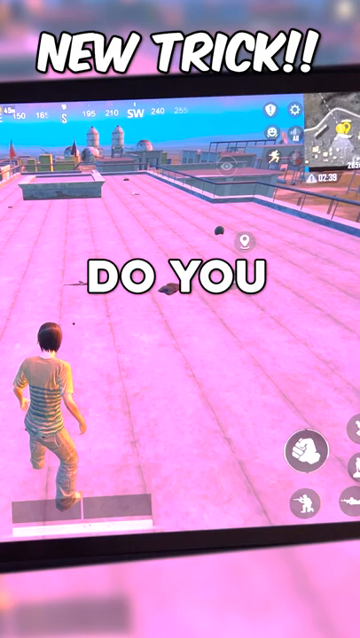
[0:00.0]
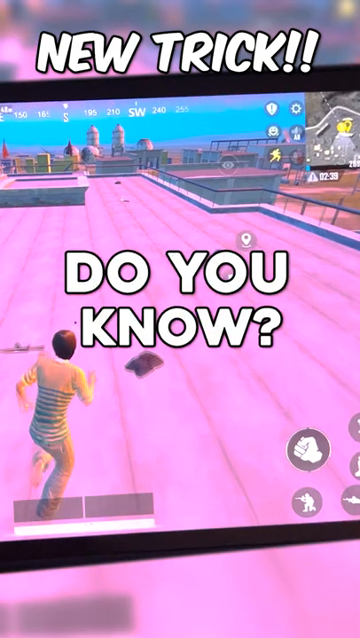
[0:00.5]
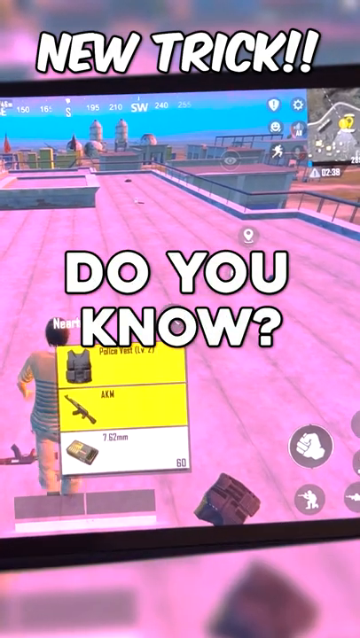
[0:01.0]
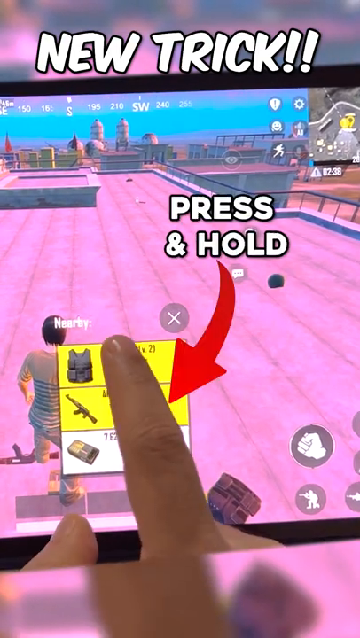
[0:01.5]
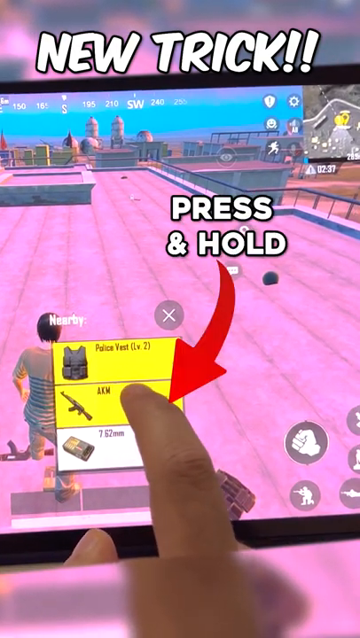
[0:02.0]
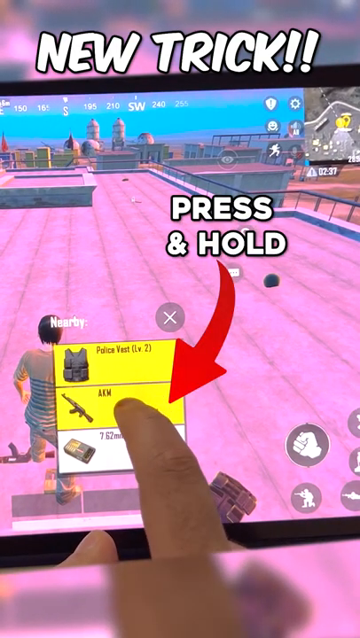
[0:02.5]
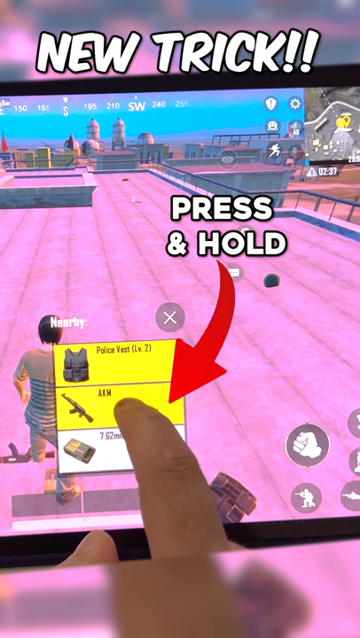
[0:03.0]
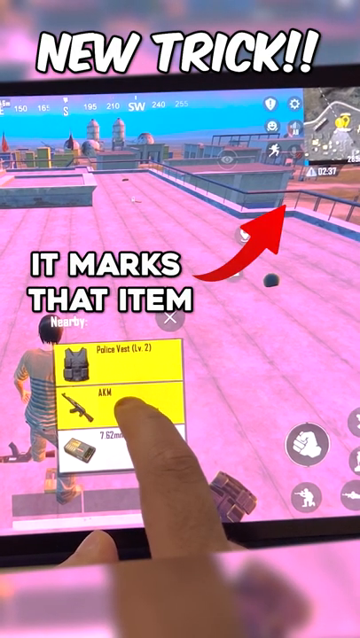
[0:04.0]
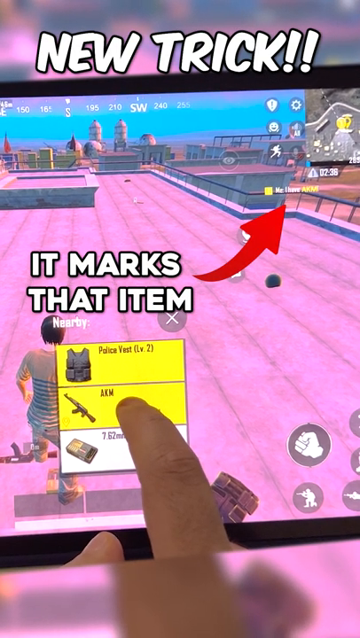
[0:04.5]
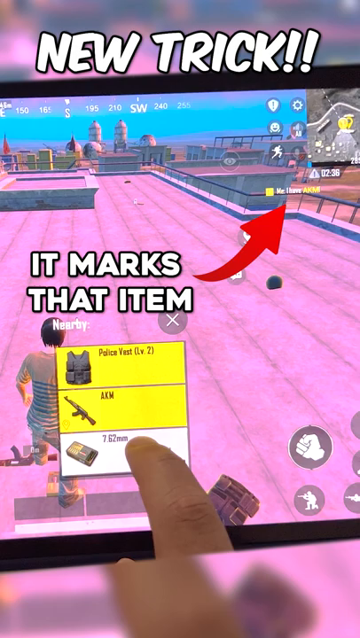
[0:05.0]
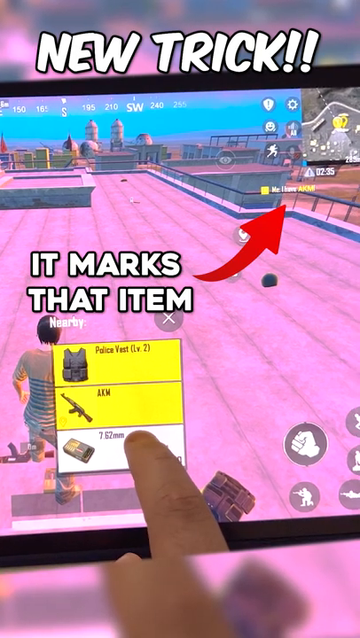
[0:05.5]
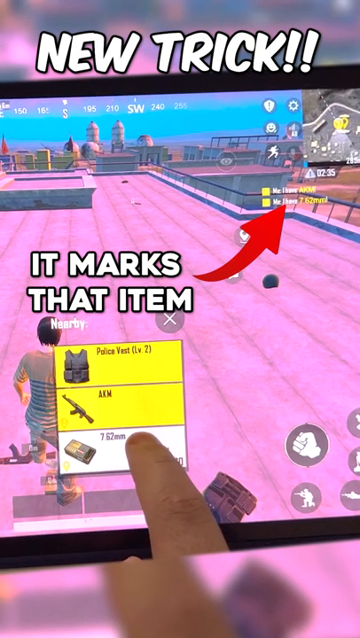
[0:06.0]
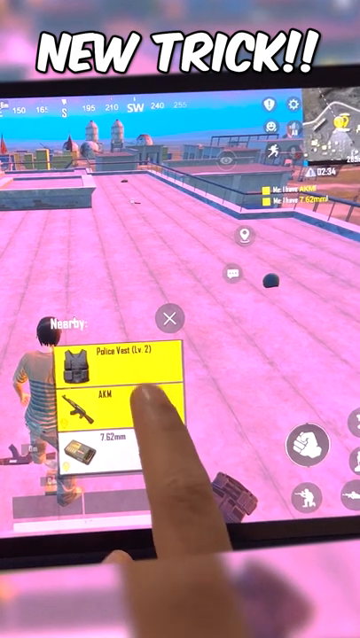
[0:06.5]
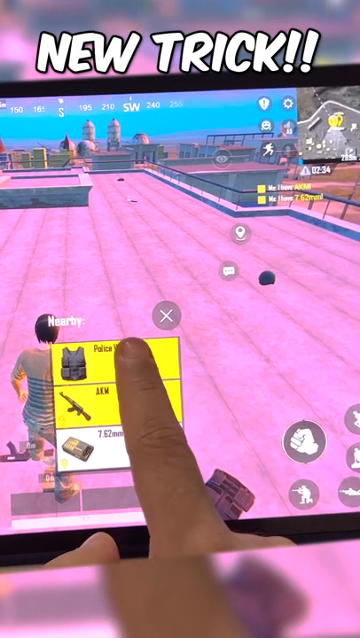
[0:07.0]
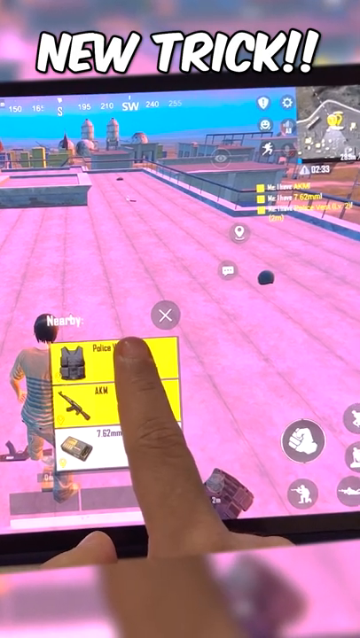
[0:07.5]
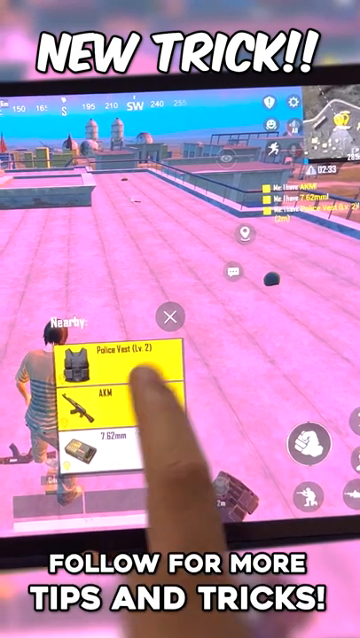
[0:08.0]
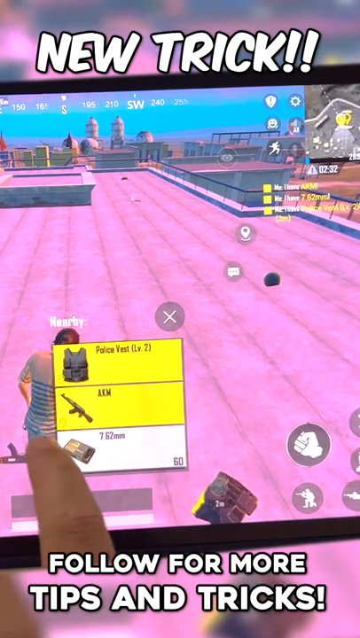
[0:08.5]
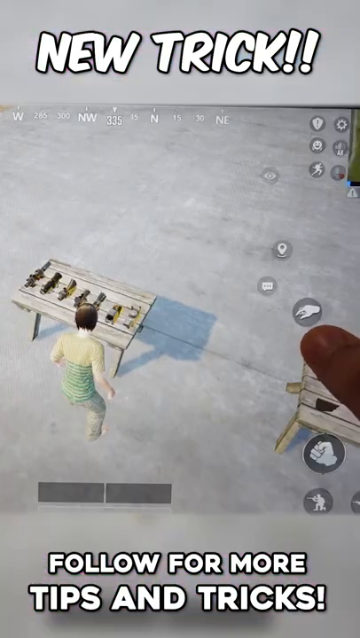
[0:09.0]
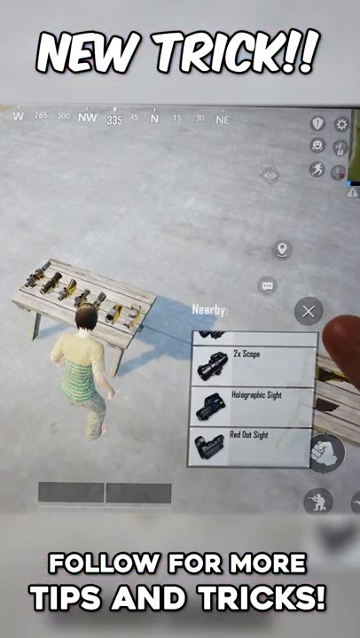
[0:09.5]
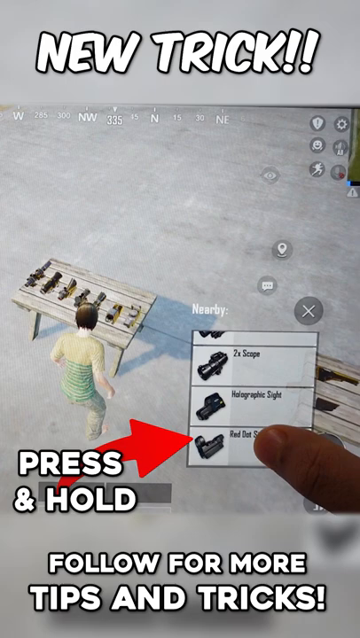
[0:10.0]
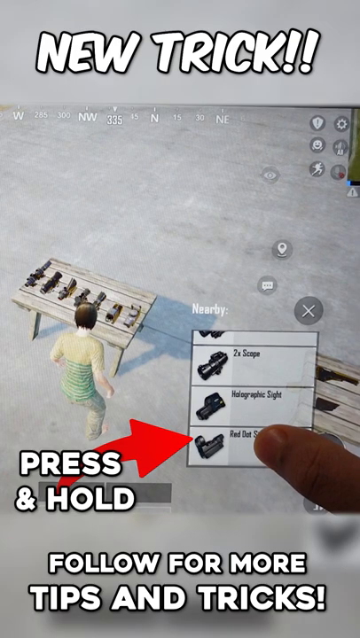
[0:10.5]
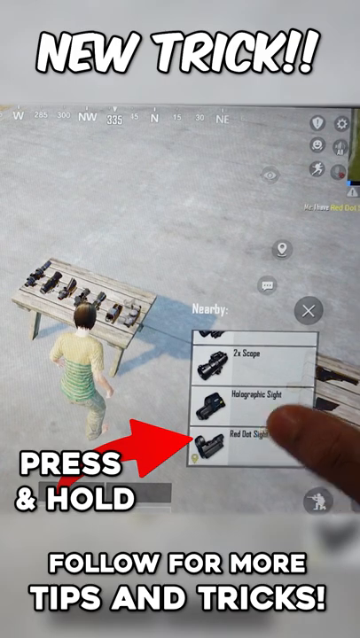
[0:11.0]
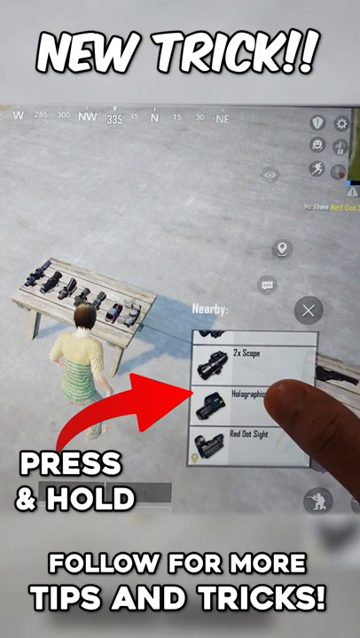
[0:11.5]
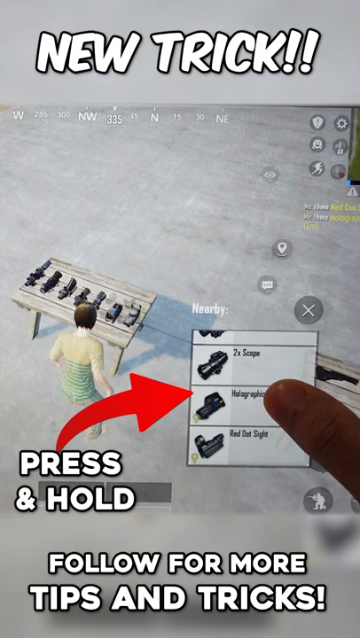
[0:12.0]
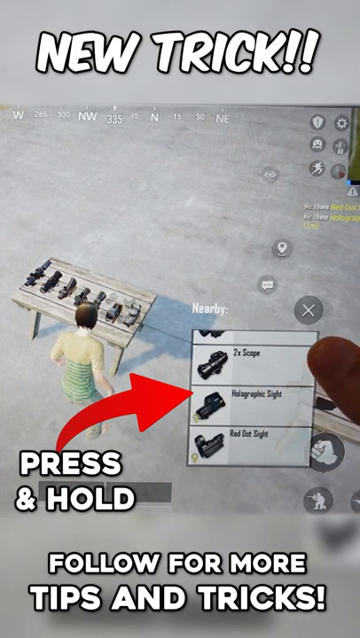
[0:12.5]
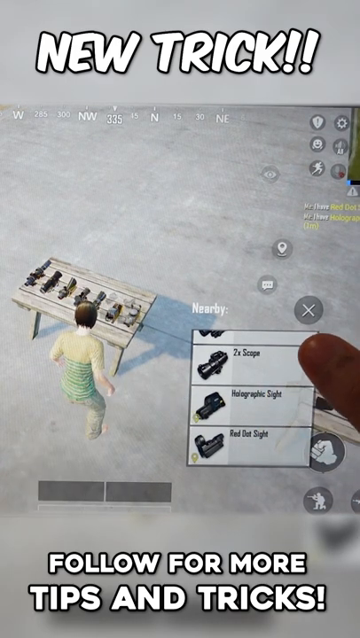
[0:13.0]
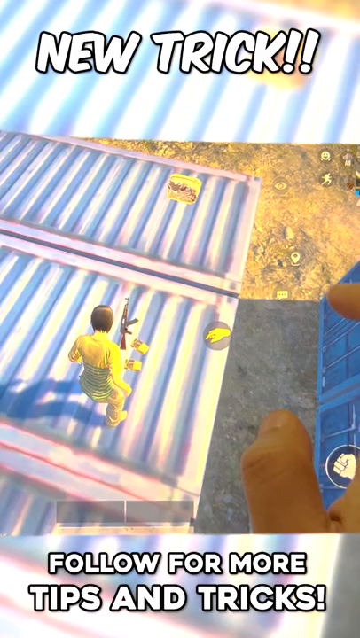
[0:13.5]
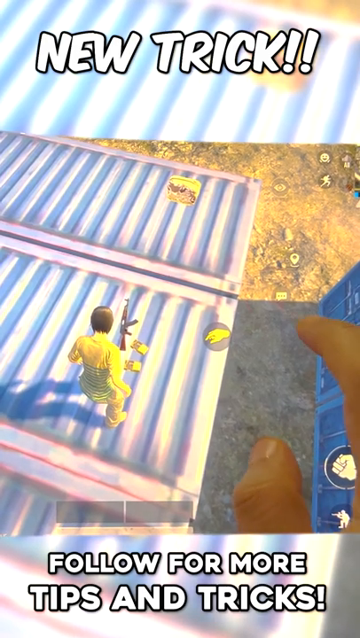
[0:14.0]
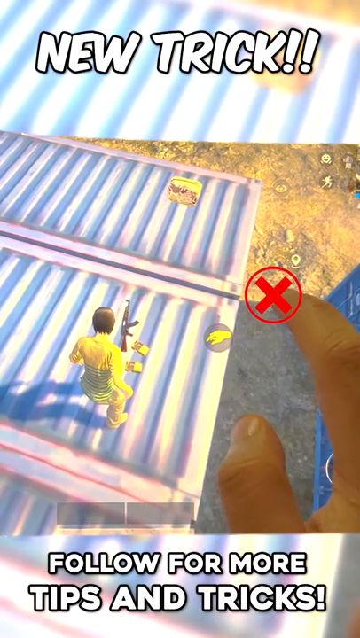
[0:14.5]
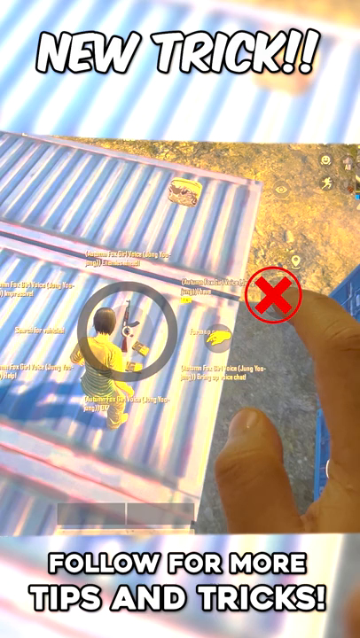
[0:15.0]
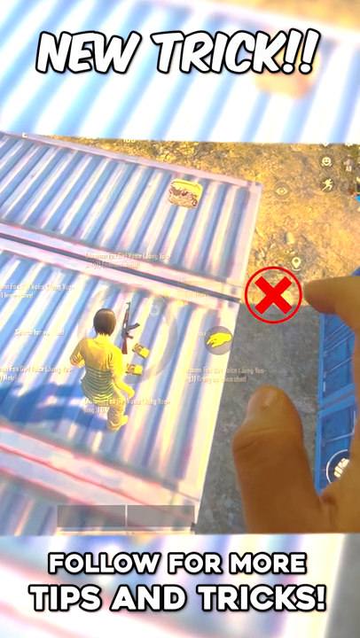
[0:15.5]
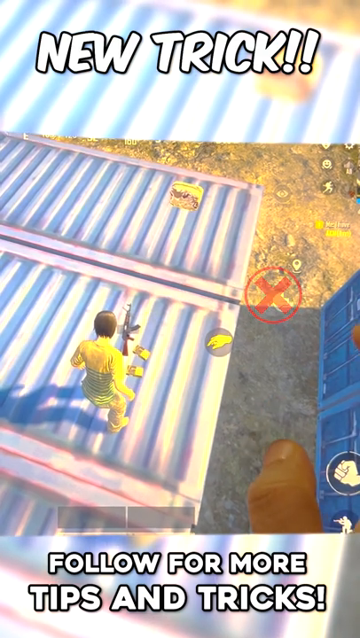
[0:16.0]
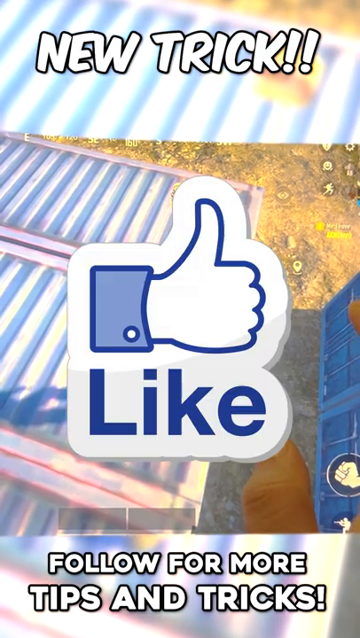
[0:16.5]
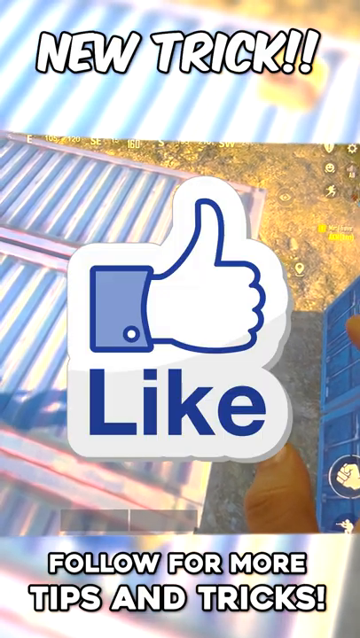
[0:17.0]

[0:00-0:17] The video demonstrates a new trick to mark items/loot in PUBG. It opens with the caption "new trick!" and the text "do you know?" in the middle of the screen. The character seems to be on top of a building that looks light pink, and he is trying to loot items on the ground, including a police vest, an AKM and a 7.62 mm magazine. The text "press and hold" appears, and a finger is visible on what is apparently an iPad or tablet. The finger presses and holds on the items, which are marked yellow, and the item gets marked. Chat boxes appear at the top right, and a caption at the bottom reads "follow for more tips and tricks!" Another "press and hold" appears over what seem to be scopes. A big red X then appears, apparently indicating that he is not holding the actual item and that it has to be picked up rather than pinged.